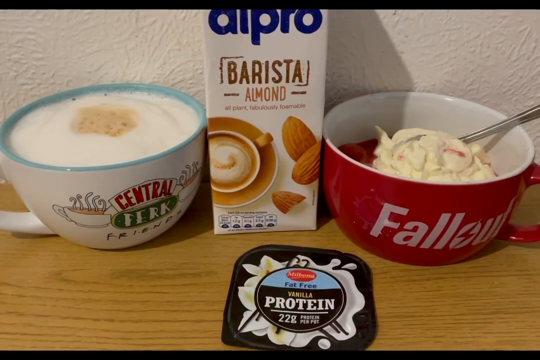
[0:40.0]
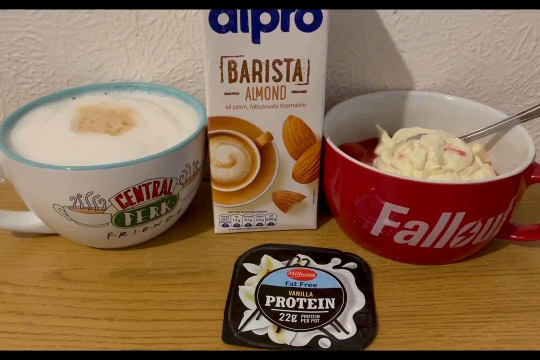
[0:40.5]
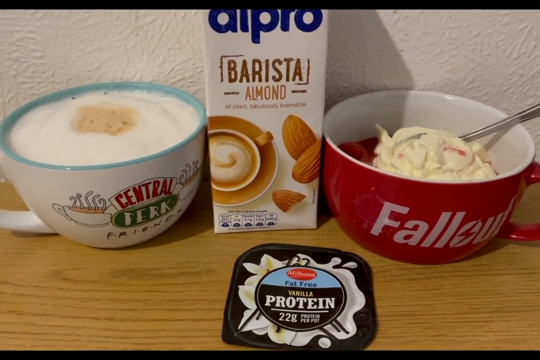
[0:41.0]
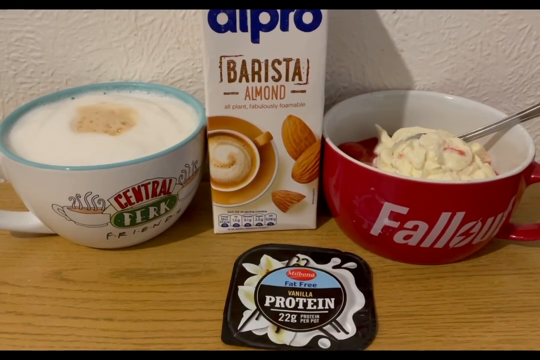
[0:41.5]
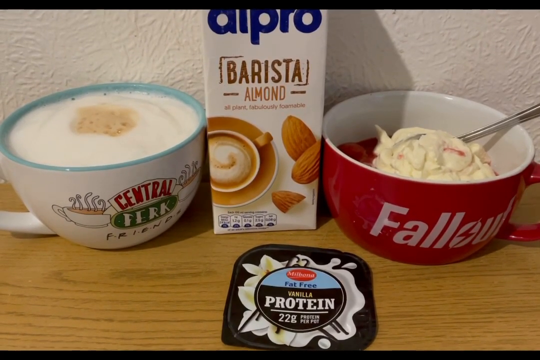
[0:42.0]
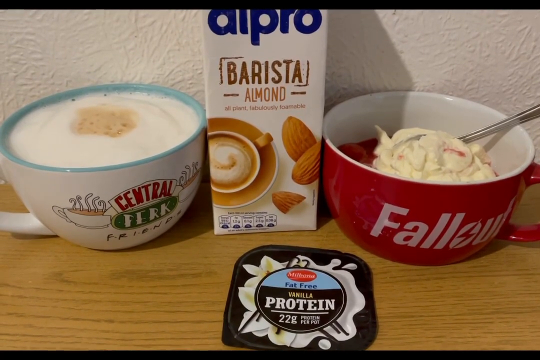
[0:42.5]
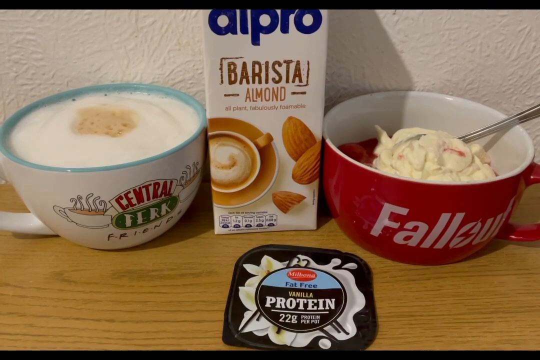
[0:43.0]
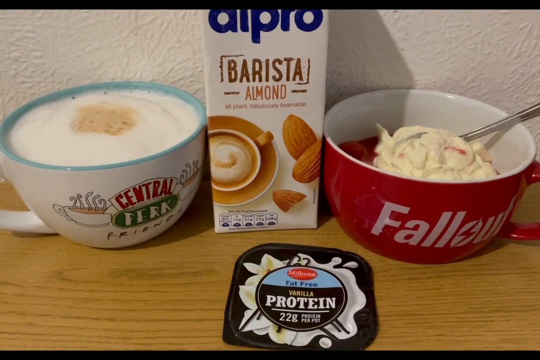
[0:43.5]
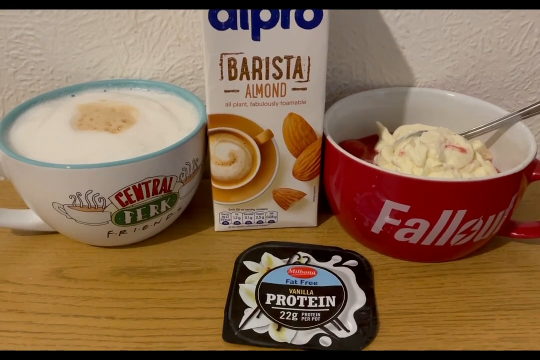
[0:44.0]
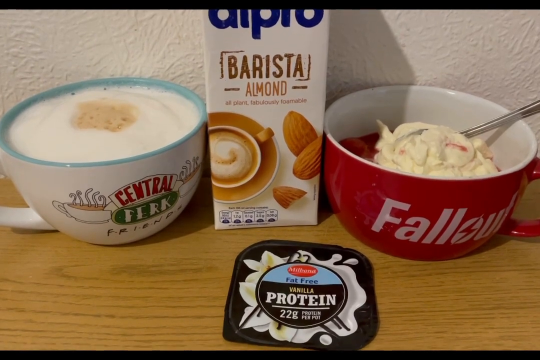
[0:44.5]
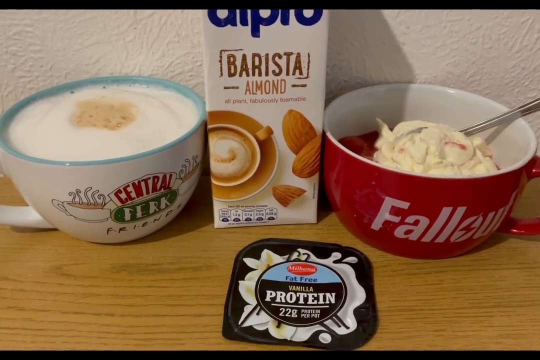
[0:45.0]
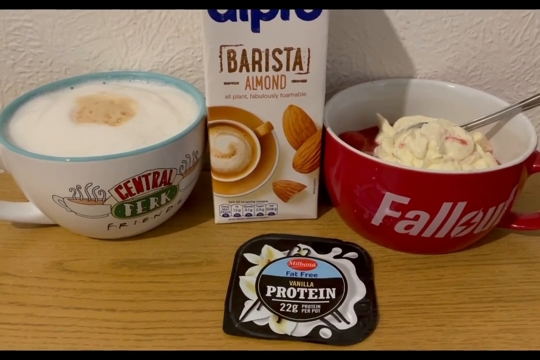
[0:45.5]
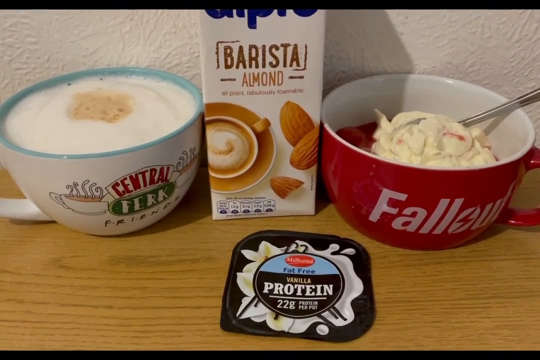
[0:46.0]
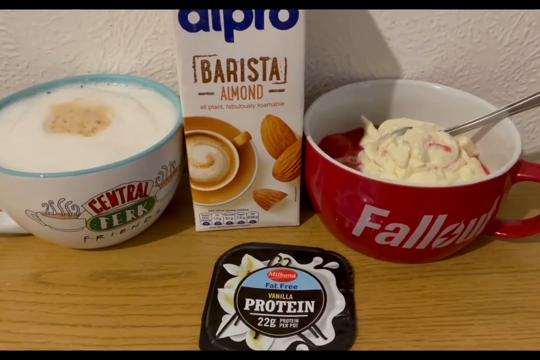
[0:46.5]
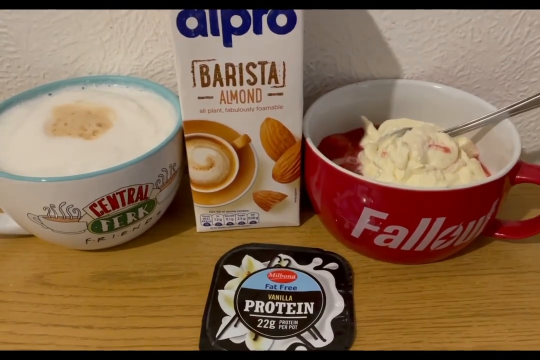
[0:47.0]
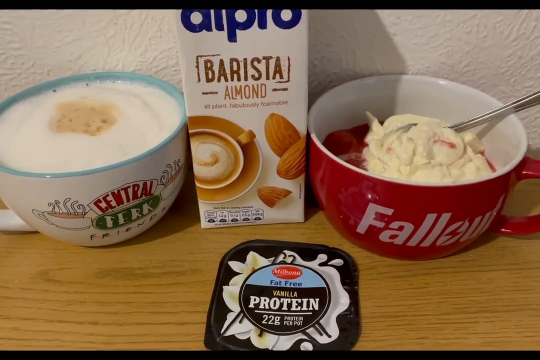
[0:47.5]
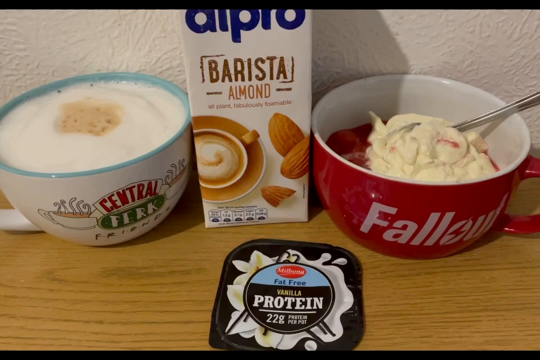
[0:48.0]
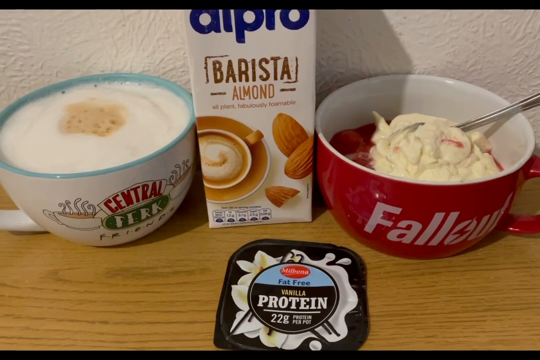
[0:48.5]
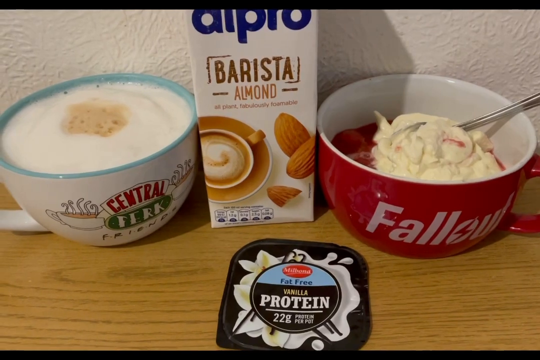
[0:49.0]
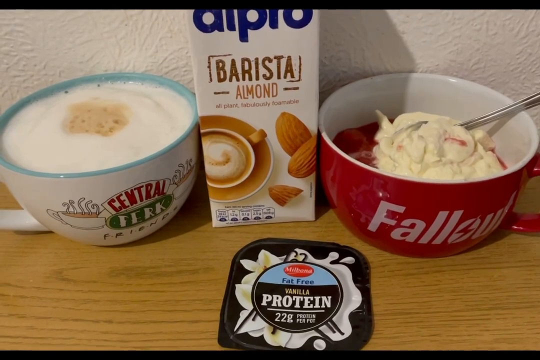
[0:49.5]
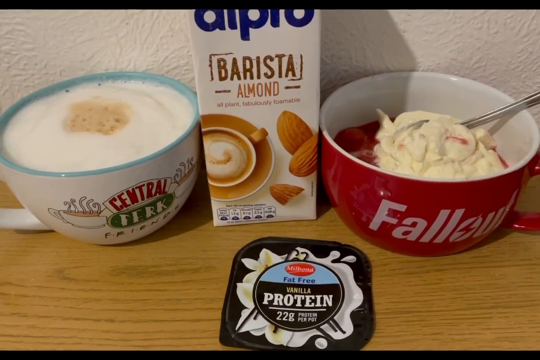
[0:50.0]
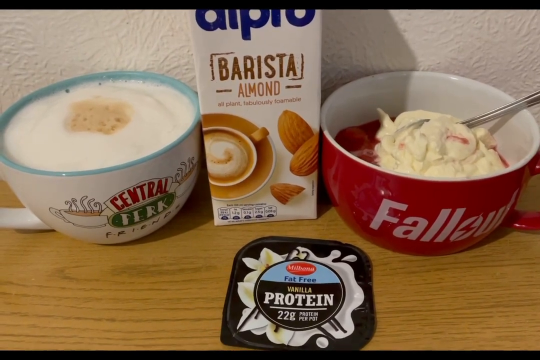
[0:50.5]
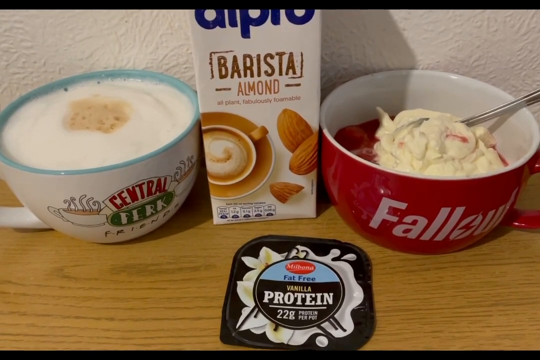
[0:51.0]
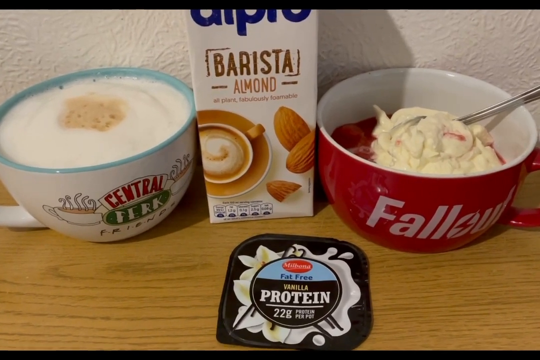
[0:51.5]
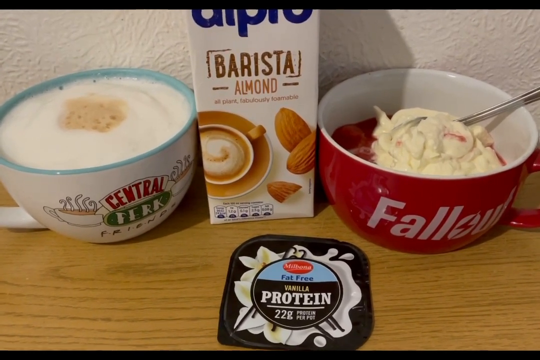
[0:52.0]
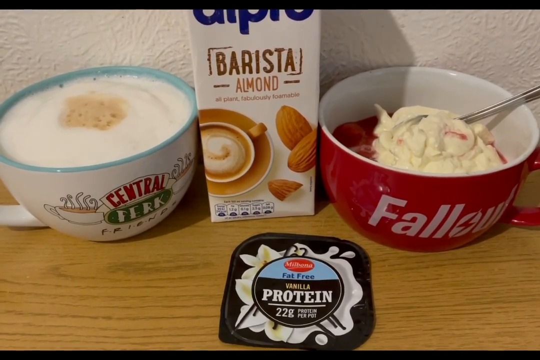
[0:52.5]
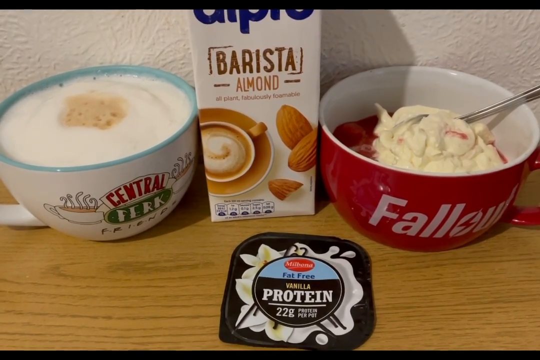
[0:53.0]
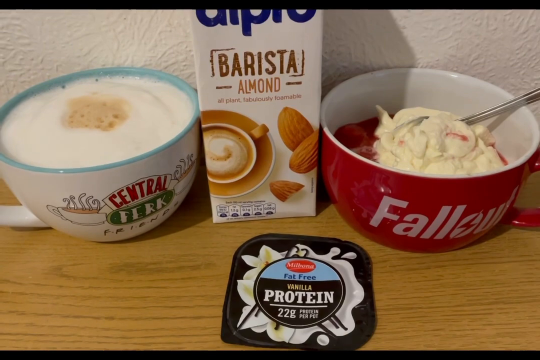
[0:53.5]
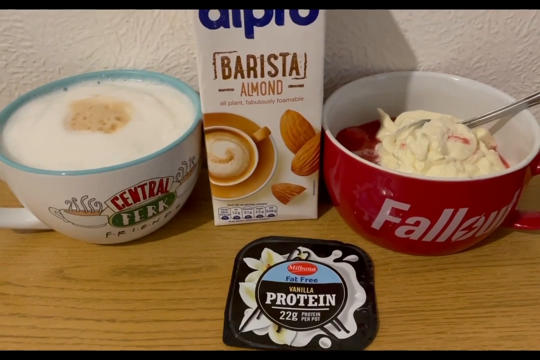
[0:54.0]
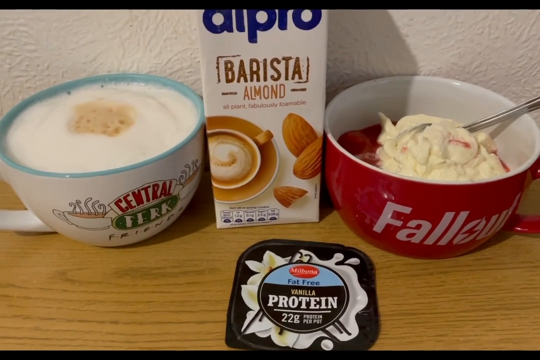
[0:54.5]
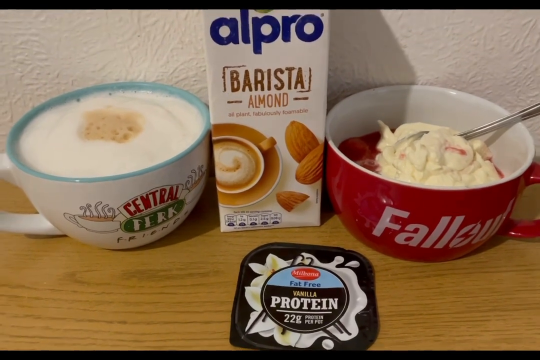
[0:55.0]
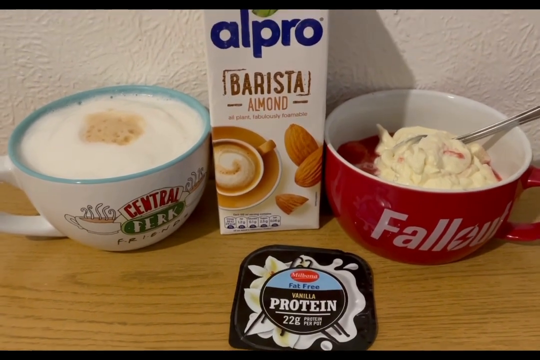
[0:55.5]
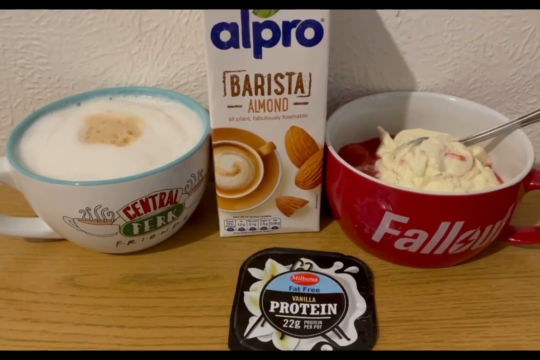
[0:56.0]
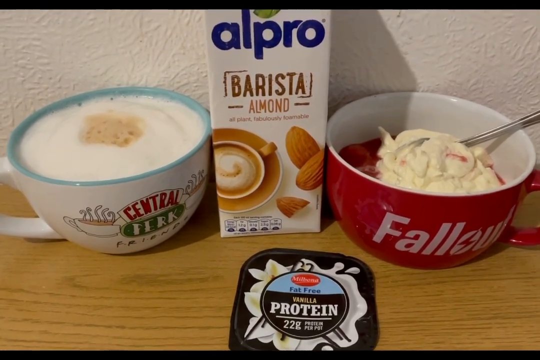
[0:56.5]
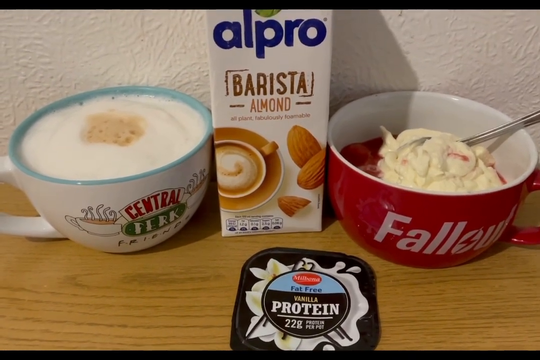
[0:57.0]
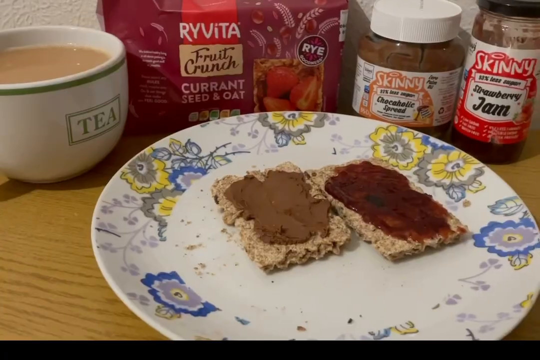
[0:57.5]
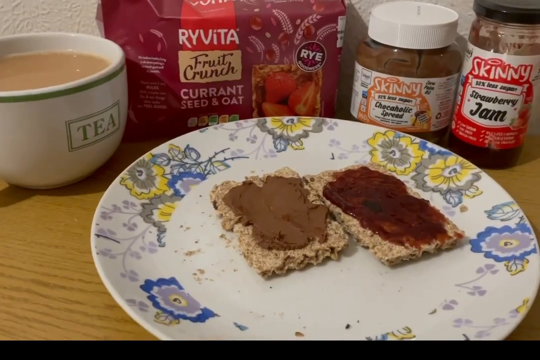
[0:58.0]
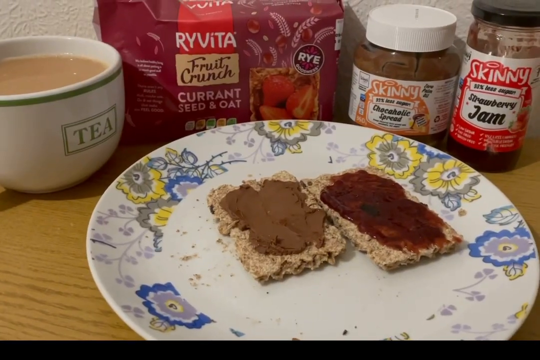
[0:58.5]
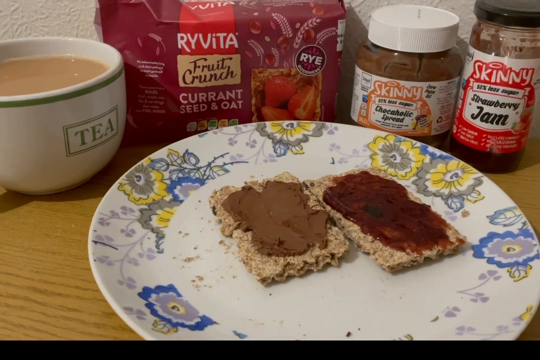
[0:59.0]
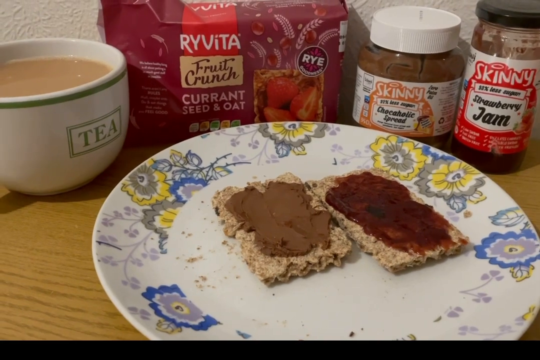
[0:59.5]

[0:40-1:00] The same items are on the worktop; what is underneath the creamy pile of something in the Fallout mug cannot really be seen. The video then moves to another mealtime on the same work surface, on the same type of plate without the piled meat and salad. The plate is largely white, with yellow, gray, blue-gray and white flowers around the rim, and the centre of the plate is largely white, maybe all white. On it are two crisp breads: one appears to have chocolate spread and the other appears to have strawberry jam. In the top right corner is a jar of skinny strawberry jam, reduced sugar, and a skinny chocoholic spread. The strawberry jam jar is glass with a black lid; the skinny chocoholic spread is possibly plastic, with a white plastic lid. To the left of those, at the top centre toward the left-hand side, is a pack of Ryvita with the text "fruit crunch currant seeds and oat" on the packaging. Further left, at the top left, is the same green-rimmed white cup with "tea" written on the side.